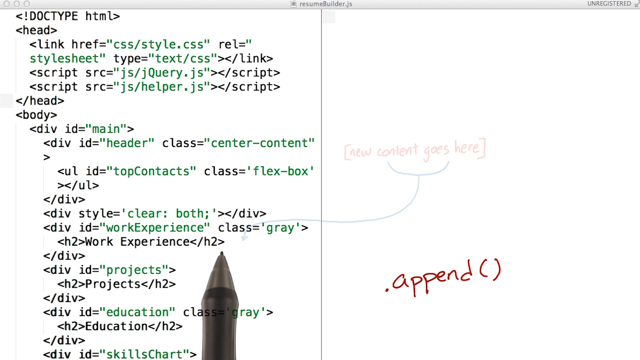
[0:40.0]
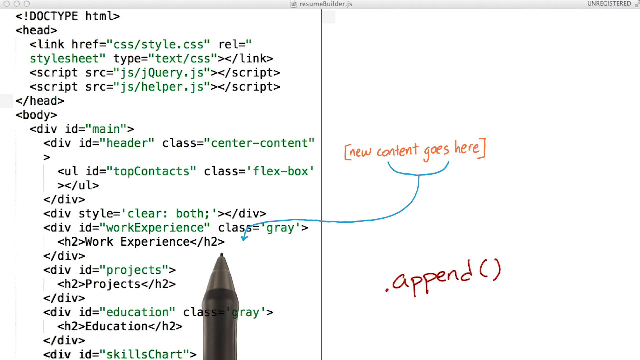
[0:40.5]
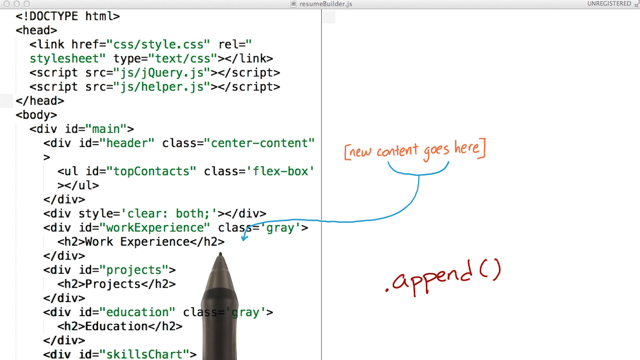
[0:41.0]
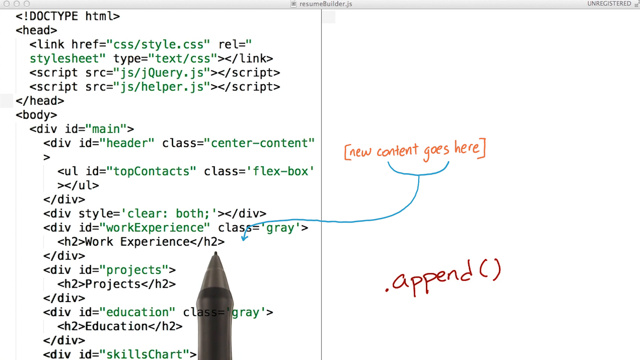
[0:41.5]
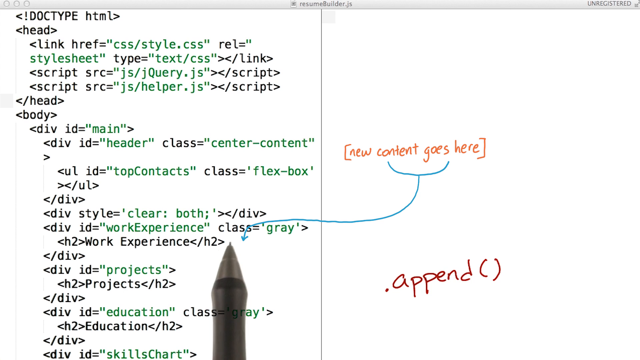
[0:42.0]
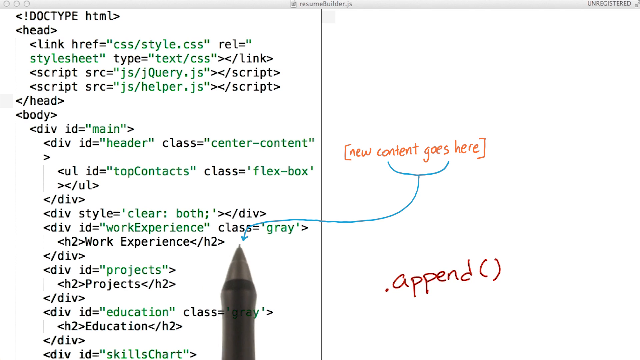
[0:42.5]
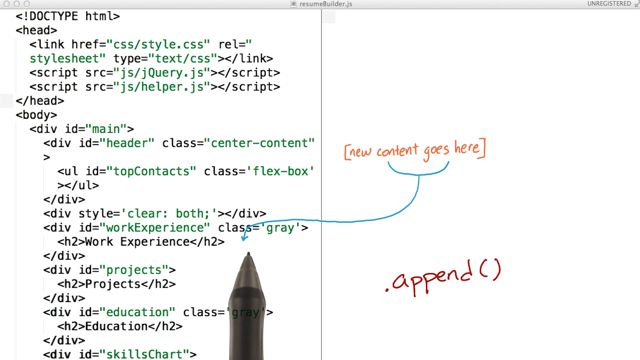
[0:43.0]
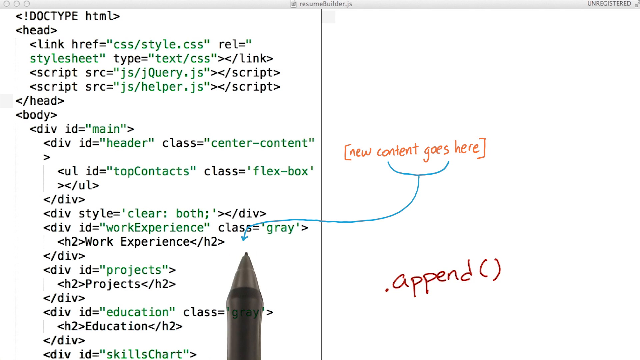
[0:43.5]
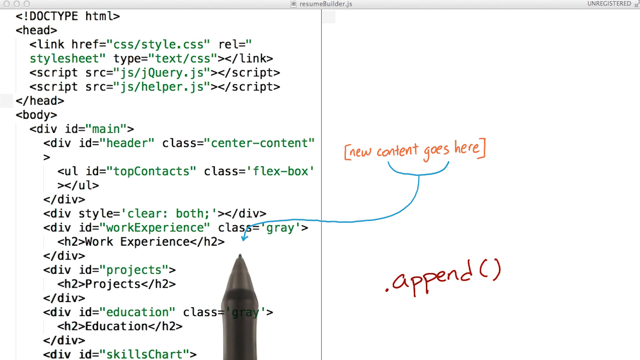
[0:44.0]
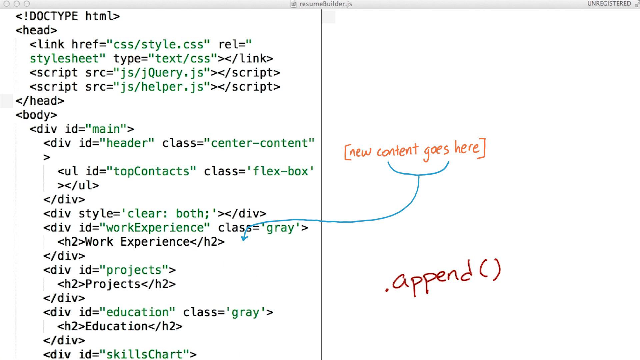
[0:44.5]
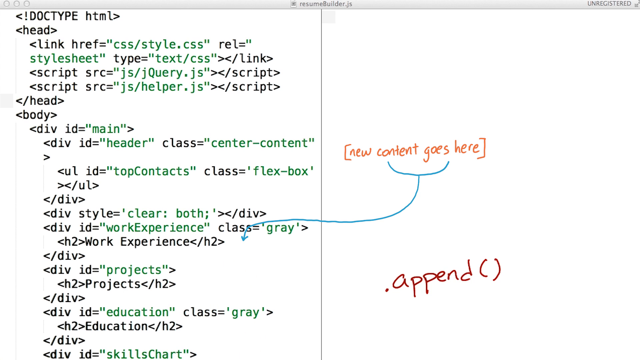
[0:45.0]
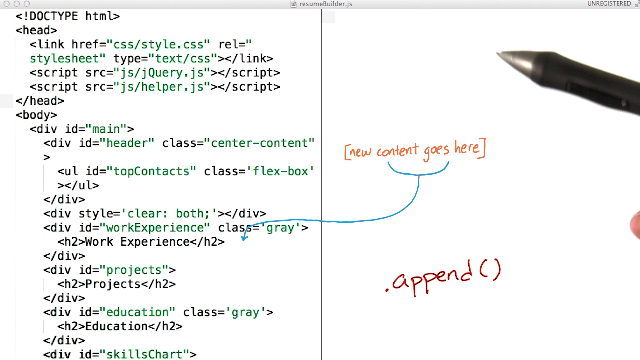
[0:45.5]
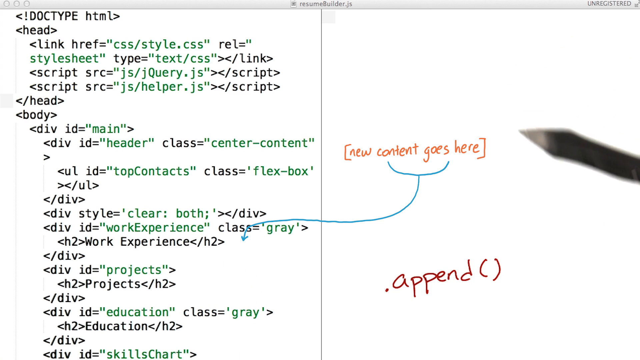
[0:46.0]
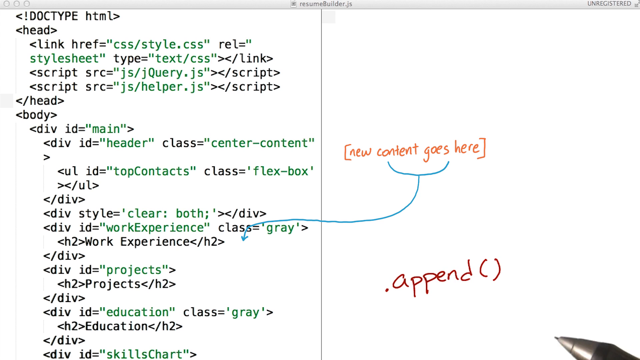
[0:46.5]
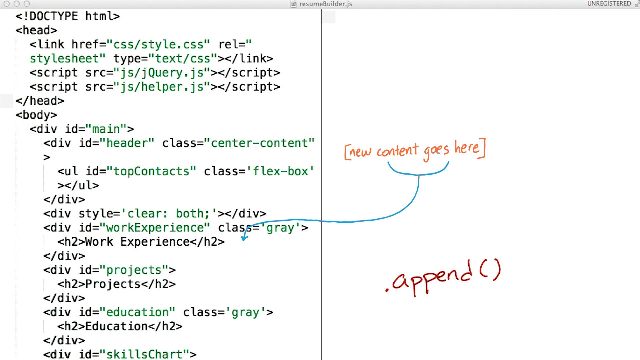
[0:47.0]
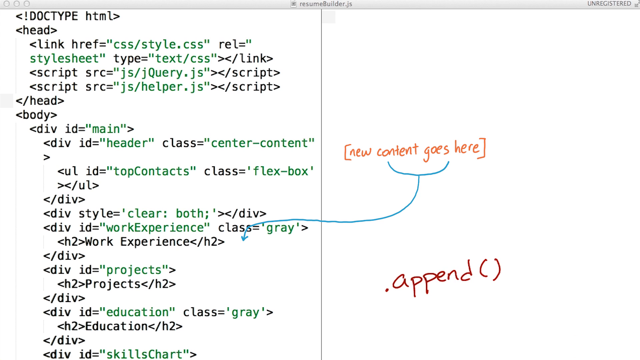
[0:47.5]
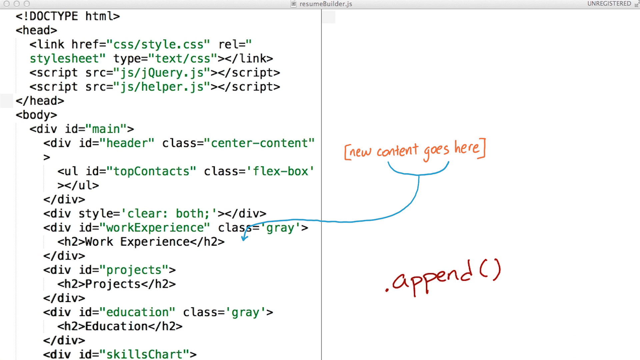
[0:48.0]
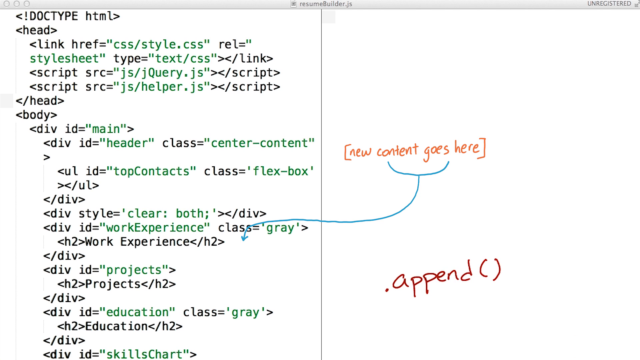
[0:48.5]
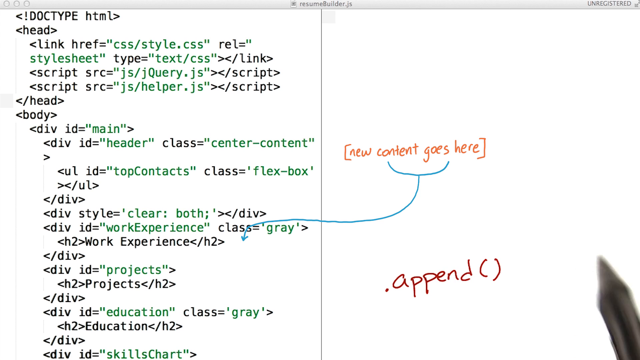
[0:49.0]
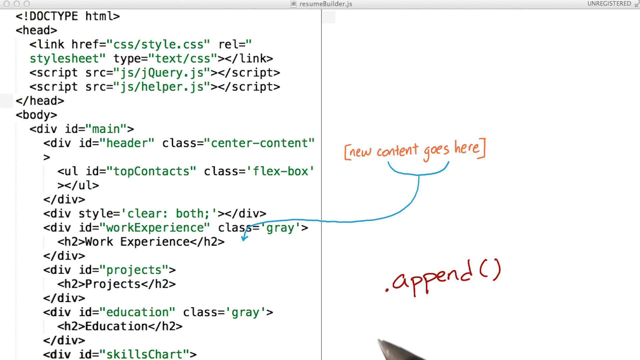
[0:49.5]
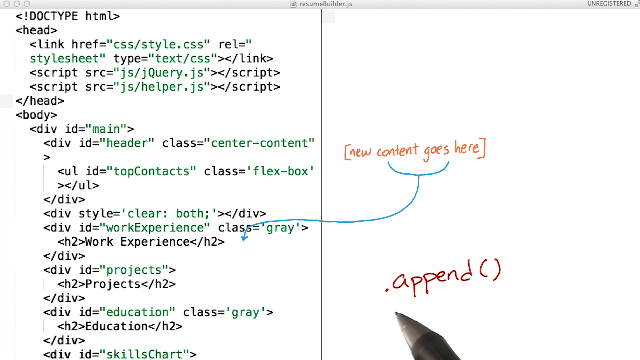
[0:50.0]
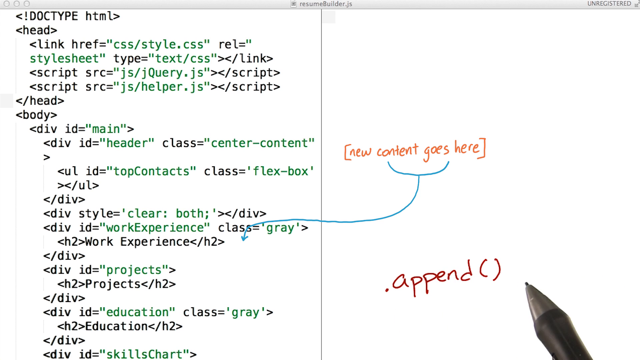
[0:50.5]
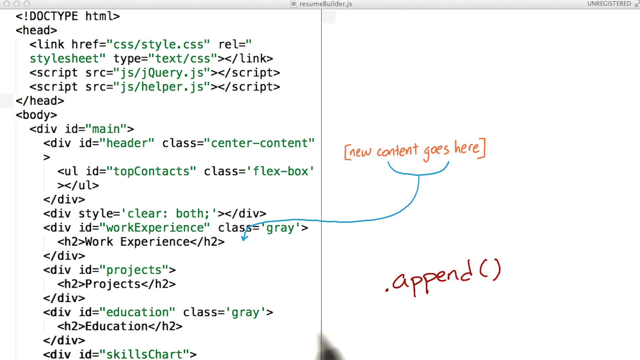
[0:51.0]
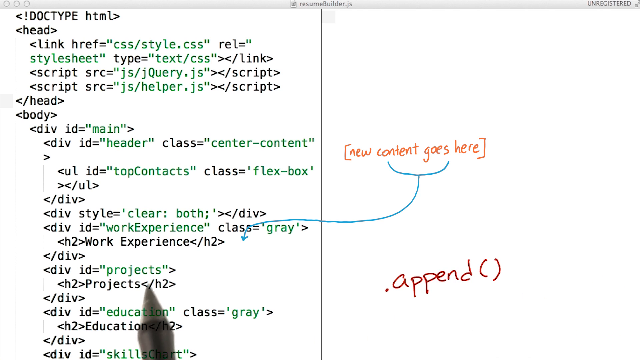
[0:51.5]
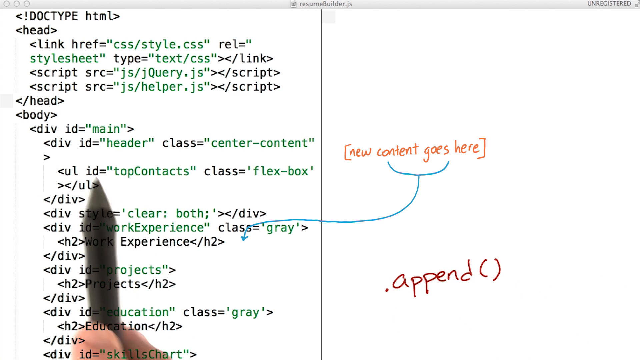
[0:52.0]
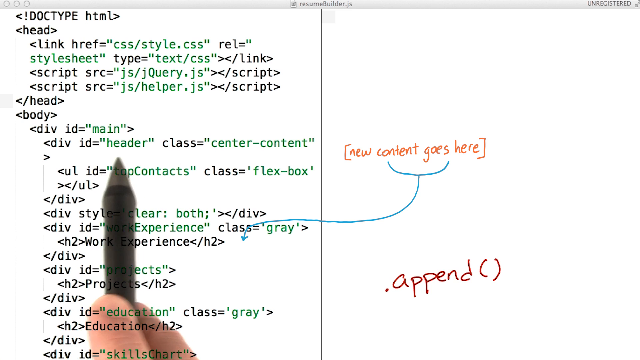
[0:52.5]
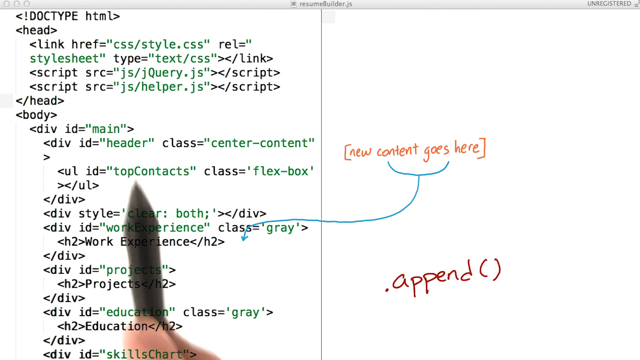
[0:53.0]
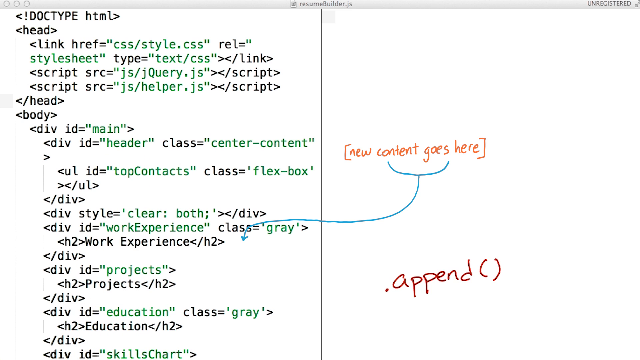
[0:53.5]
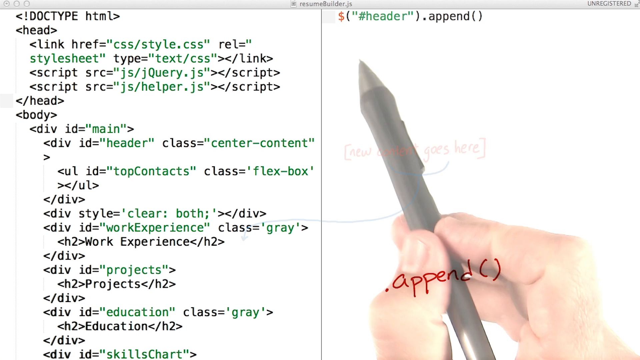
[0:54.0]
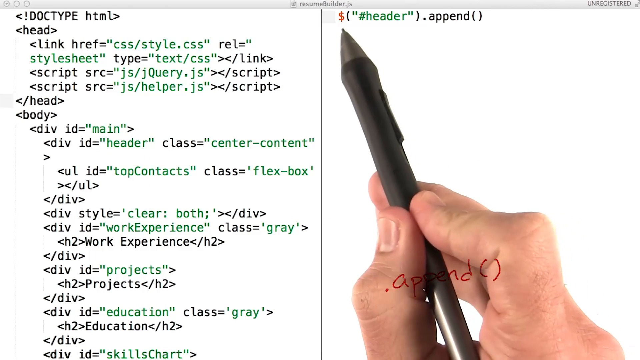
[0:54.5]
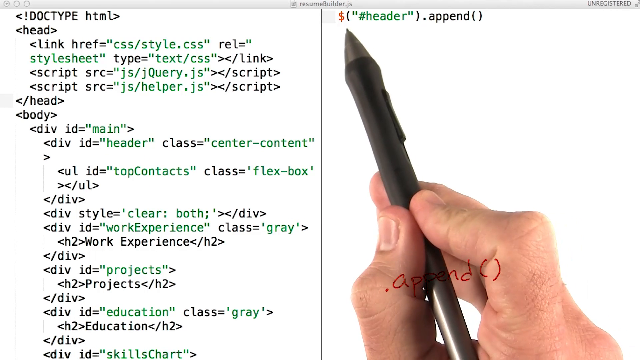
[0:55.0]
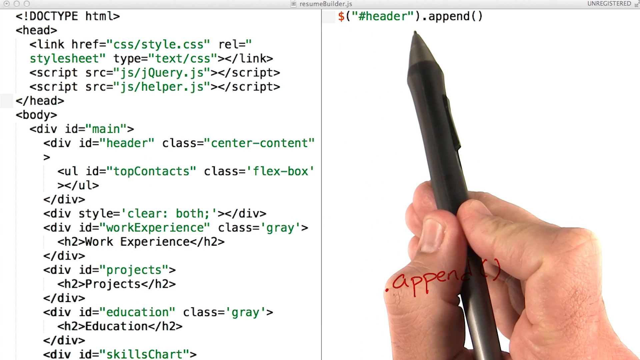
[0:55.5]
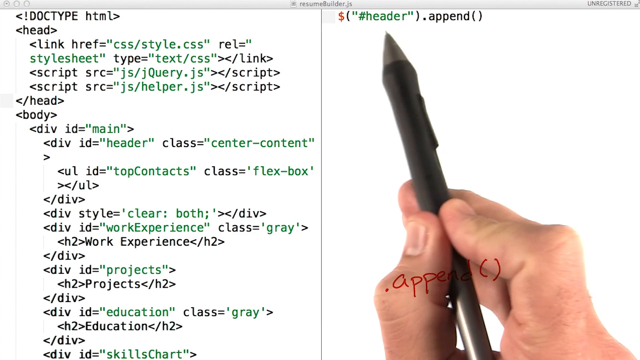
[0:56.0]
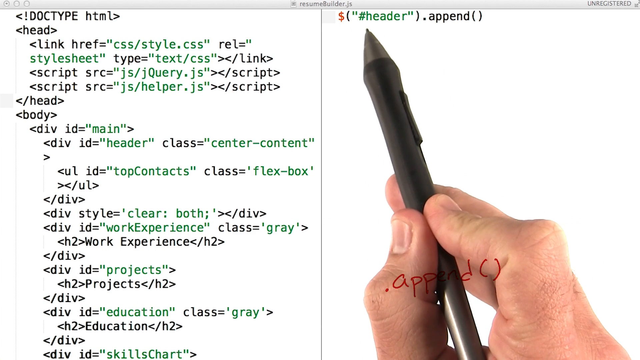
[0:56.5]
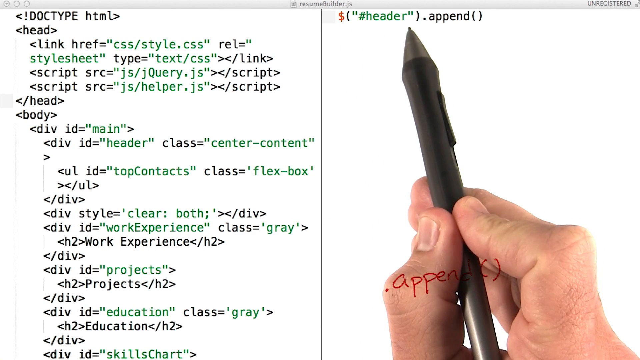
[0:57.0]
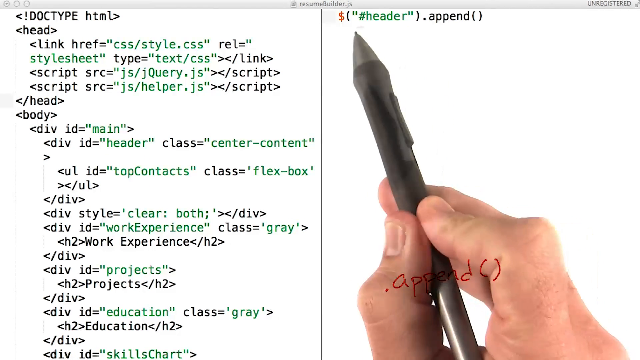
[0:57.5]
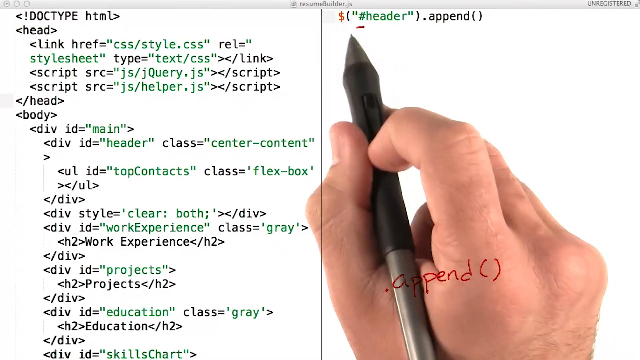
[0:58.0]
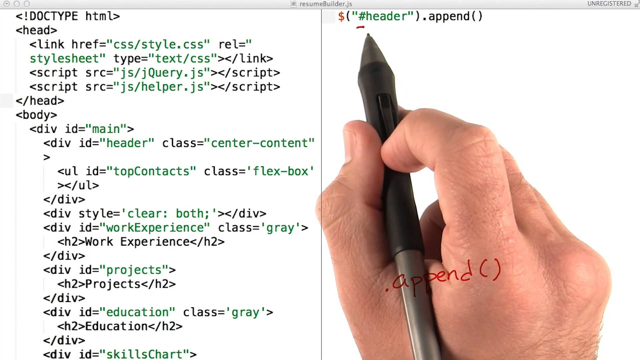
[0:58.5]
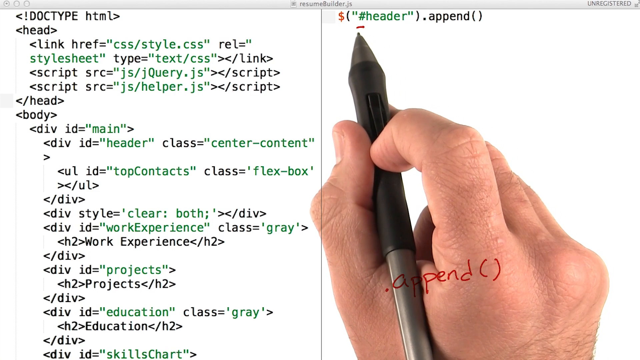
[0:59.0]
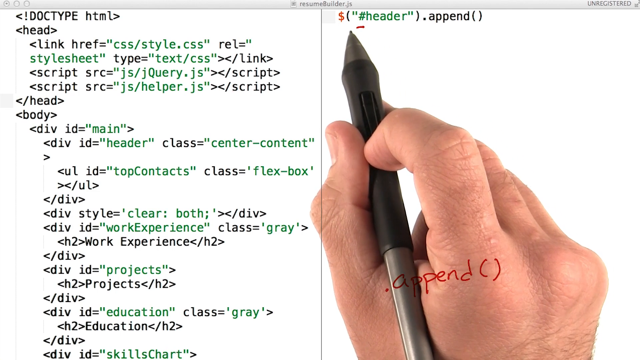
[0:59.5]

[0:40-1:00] The page full of mixed-up words is still shown, with another page open next to it. Words are highlighted and moved from the first page to the other side, onto the clean new page that was opened first.